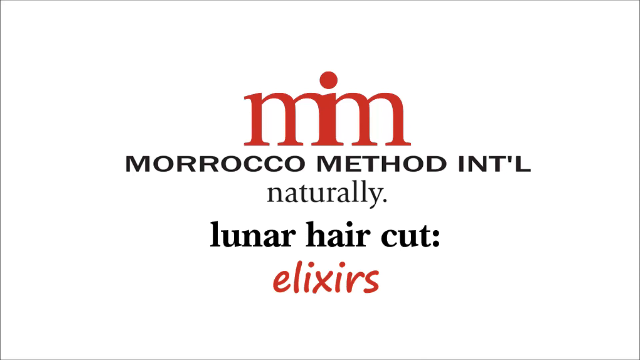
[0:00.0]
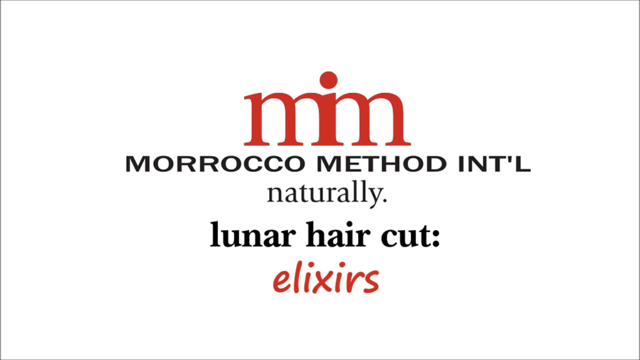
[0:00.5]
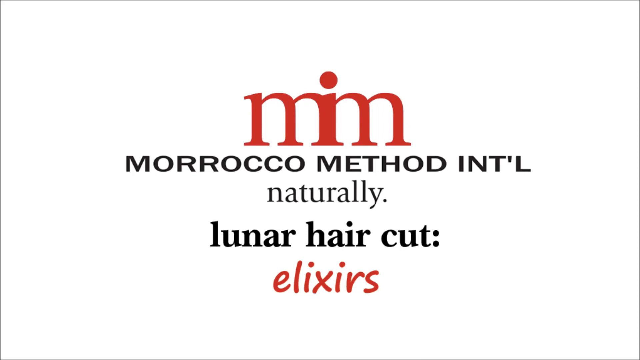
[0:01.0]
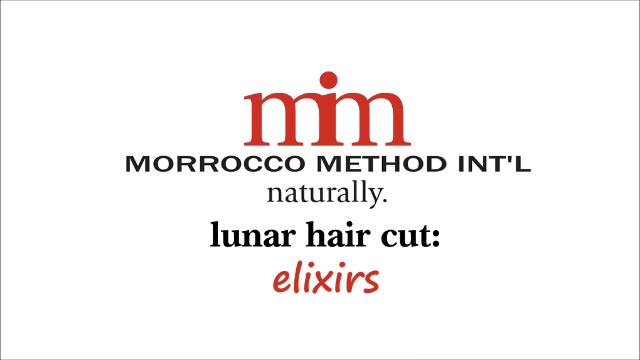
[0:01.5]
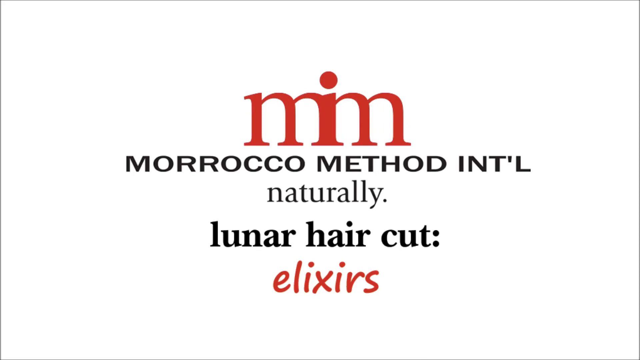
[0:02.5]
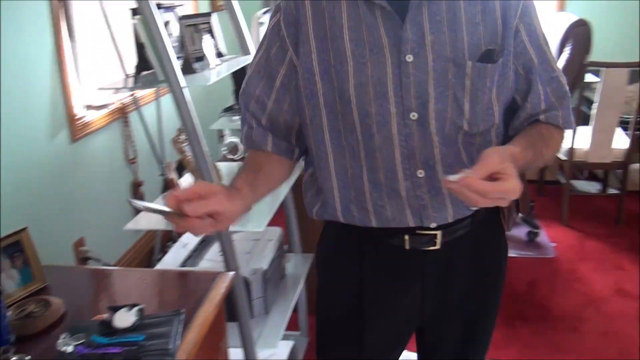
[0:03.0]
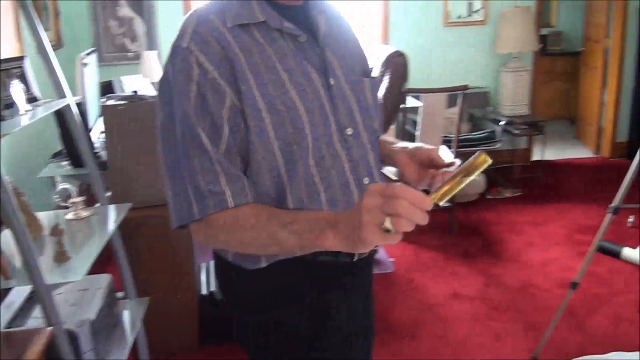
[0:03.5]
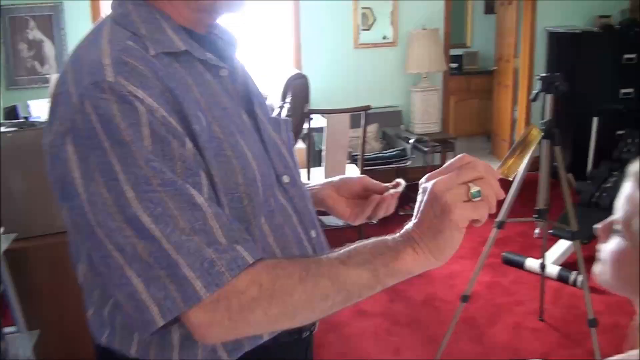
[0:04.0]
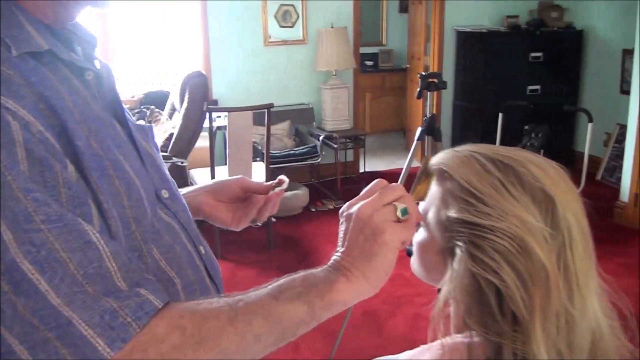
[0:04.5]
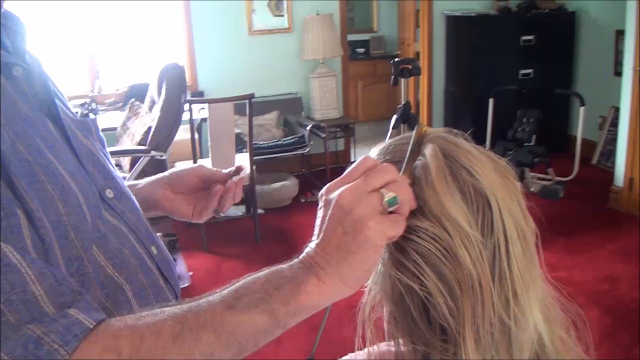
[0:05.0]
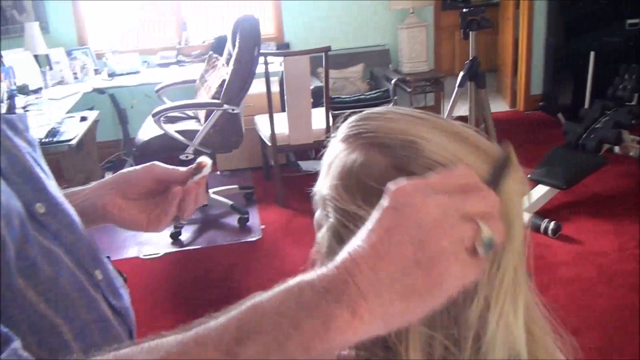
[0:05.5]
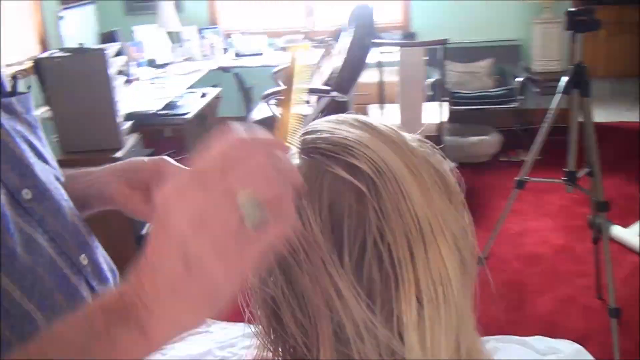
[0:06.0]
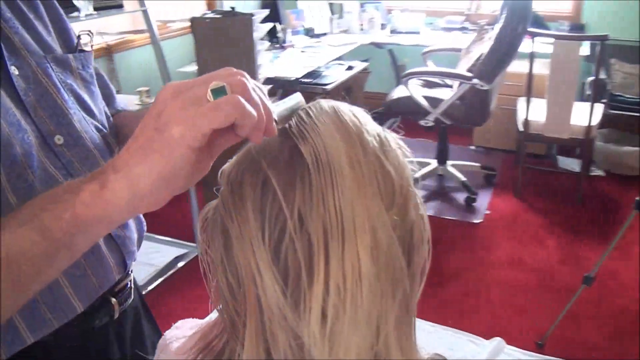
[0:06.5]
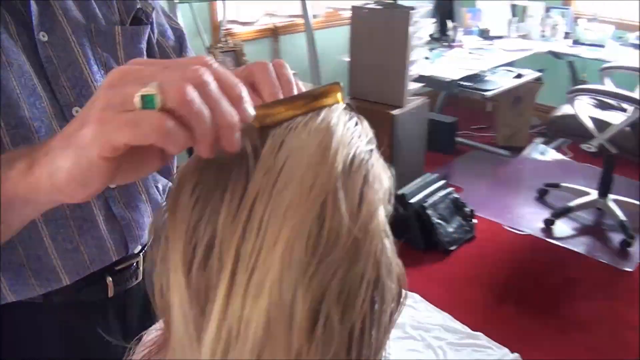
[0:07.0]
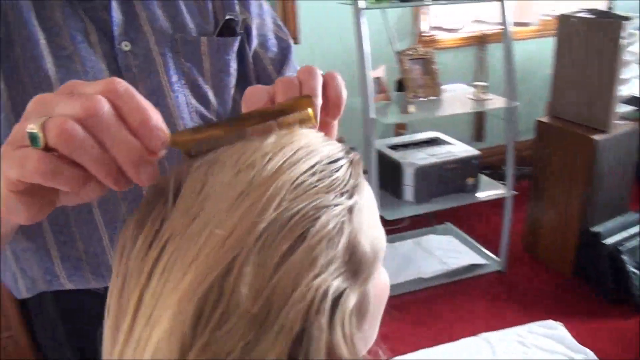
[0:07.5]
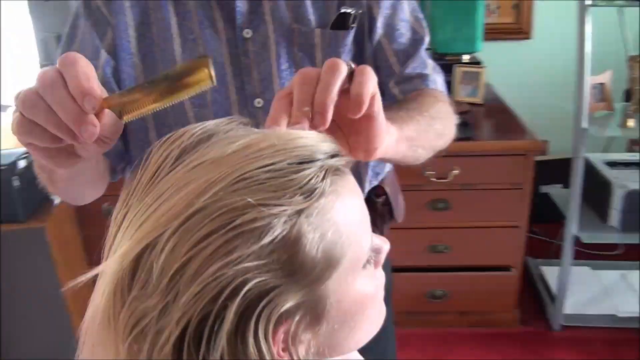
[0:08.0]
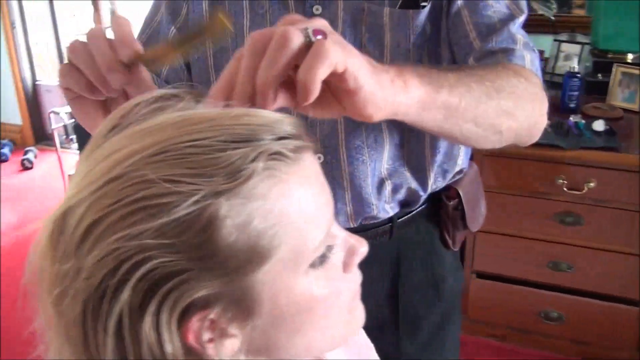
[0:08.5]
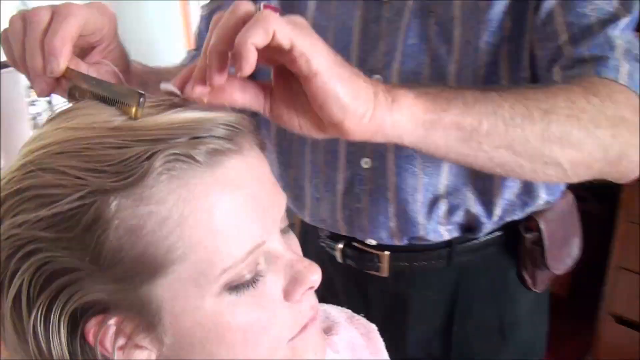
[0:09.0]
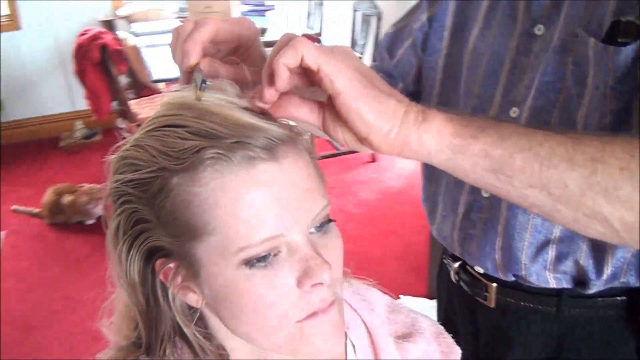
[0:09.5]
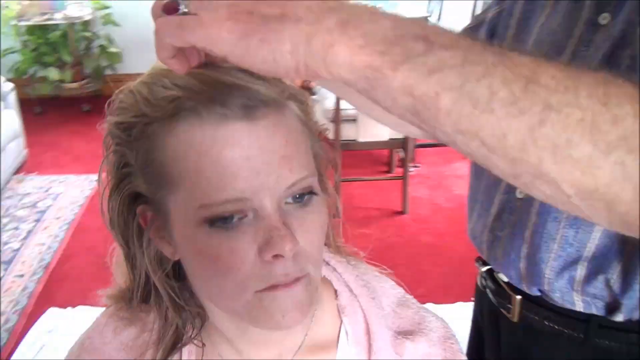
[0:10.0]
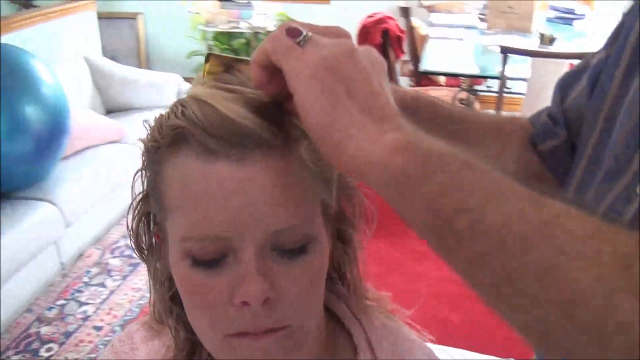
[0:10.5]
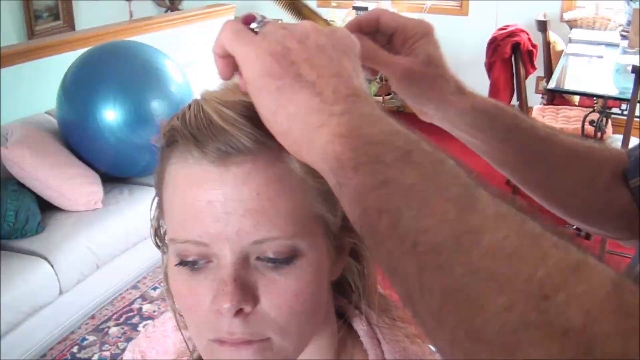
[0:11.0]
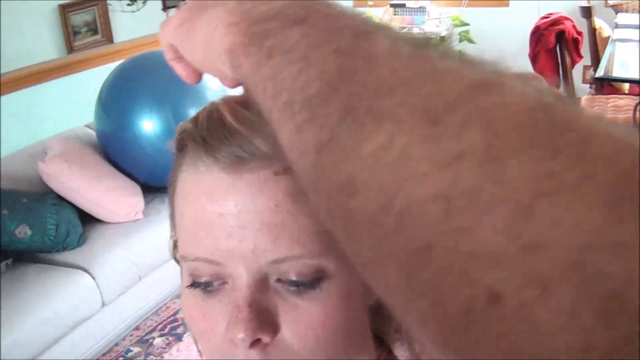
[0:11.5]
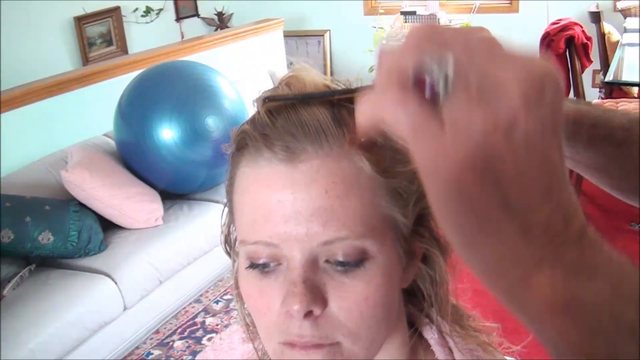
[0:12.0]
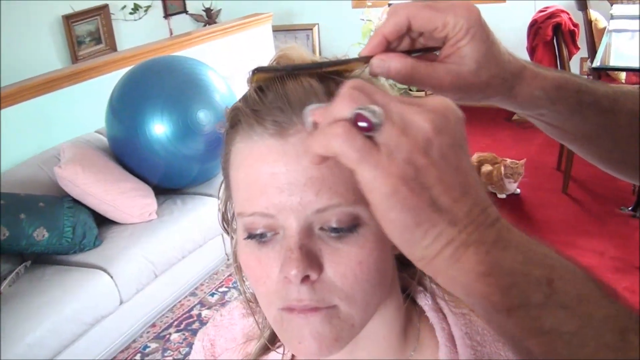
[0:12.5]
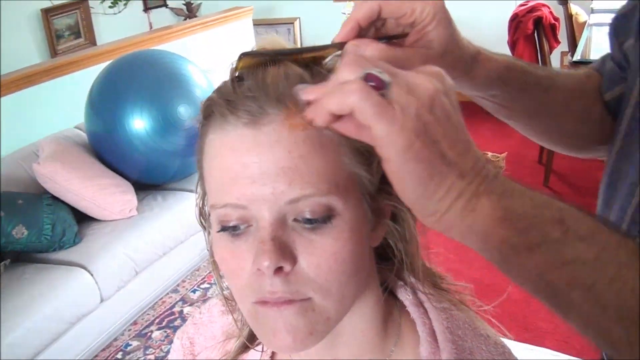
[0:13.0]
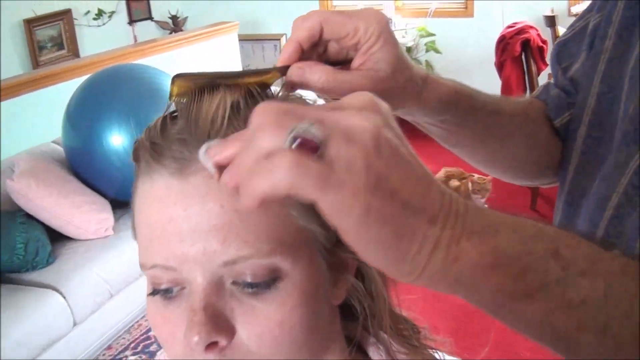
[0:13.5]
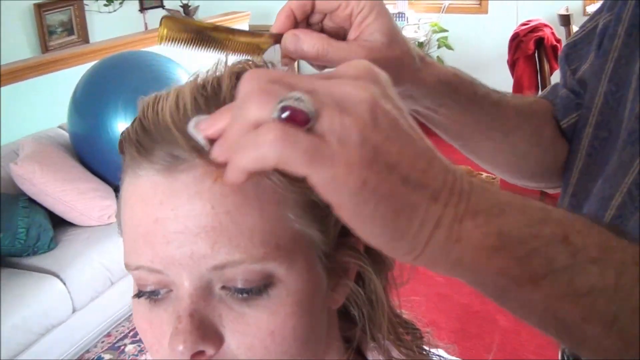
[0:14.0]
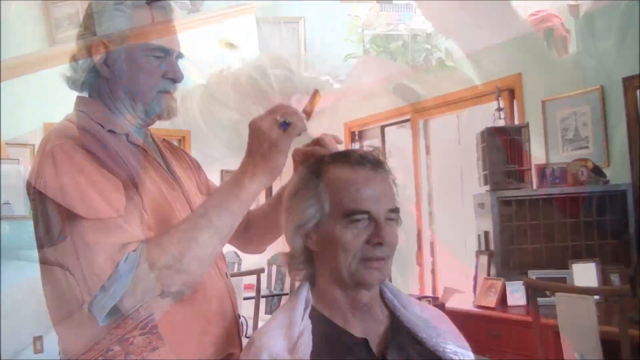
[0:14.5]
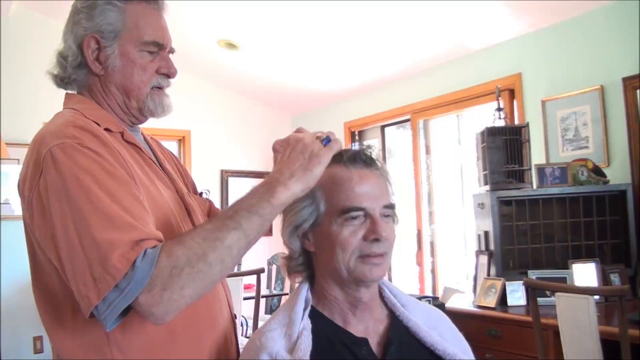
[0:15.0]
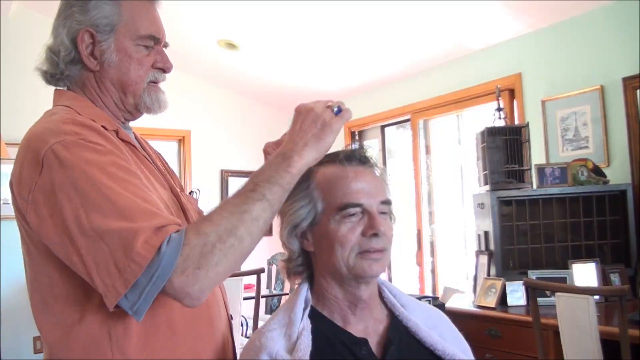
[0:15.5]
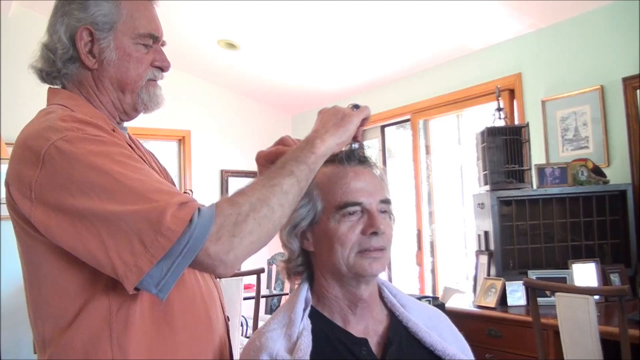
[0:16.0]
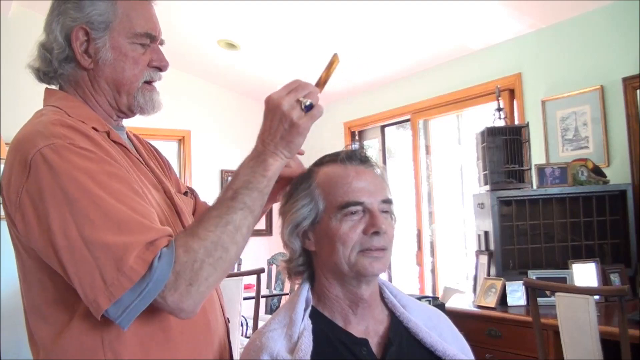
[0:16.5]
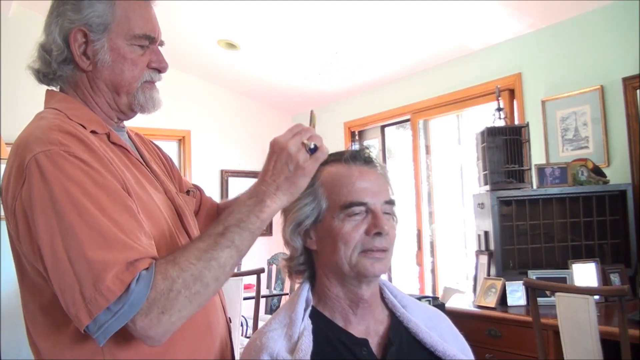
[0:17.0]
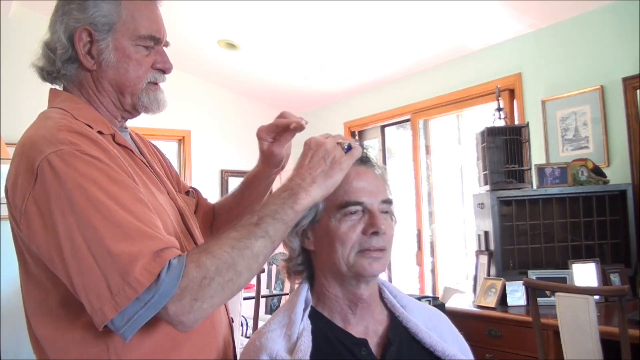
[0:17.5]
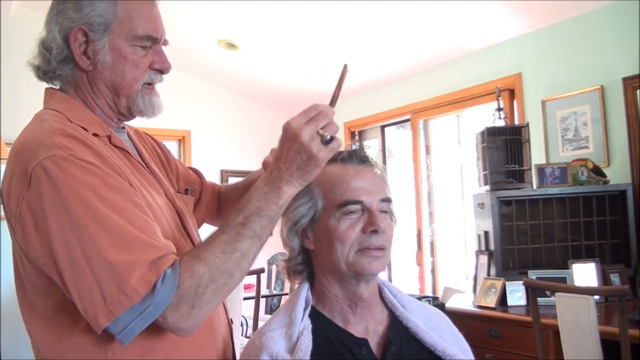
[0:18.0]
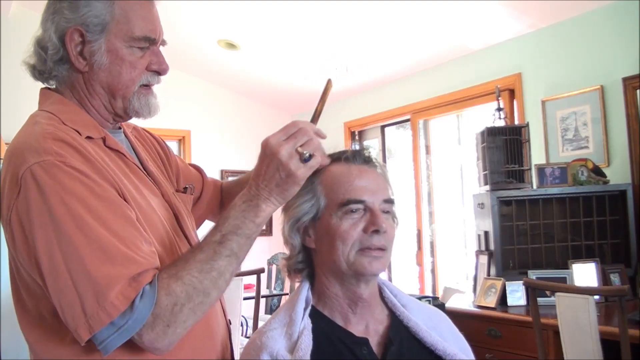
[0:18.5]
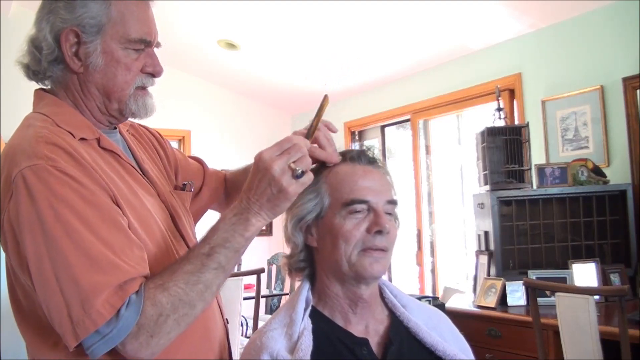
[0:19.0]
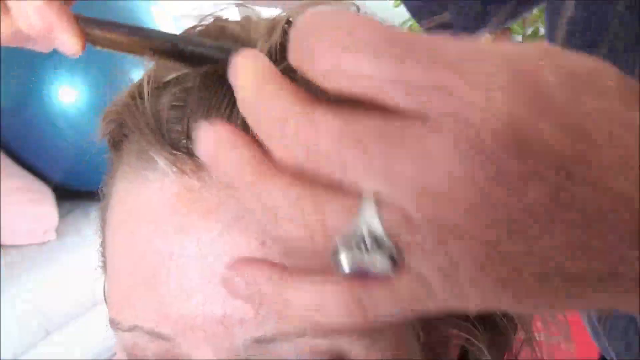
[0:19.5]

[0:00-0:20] This is an ad for Morocco Method International. It opens on a text screen with a white background. At the top is a red logo made of an M and an I, with the I appearing to be imposed over the middle of the M. The next line reads "Morocco Method International," followed by "naturally," and then "lunar haircut:" and "elixirs." The video then cuts to a person in a room, perhaps a salon, who has a comb and is combing the hair of a woman who appears to be in a chair.